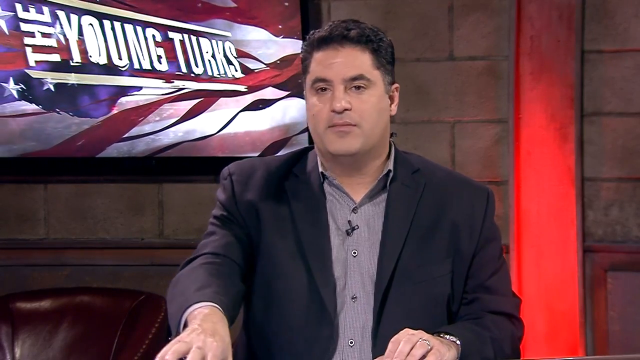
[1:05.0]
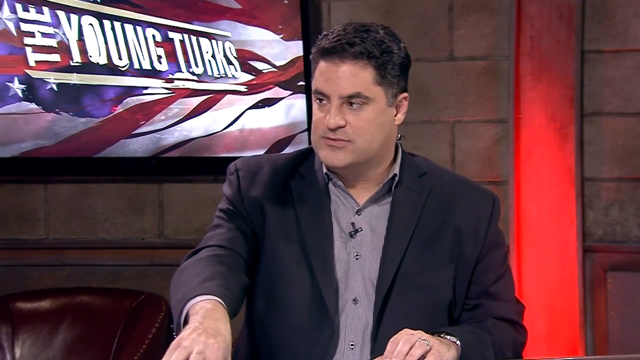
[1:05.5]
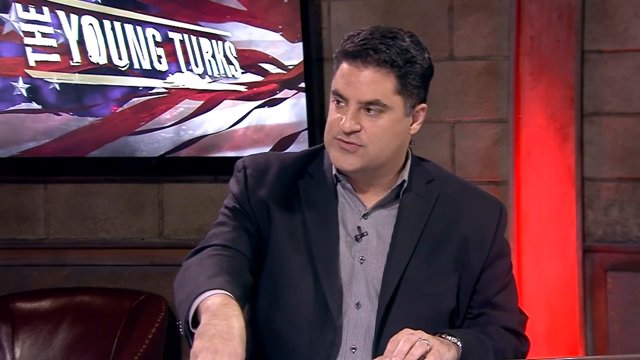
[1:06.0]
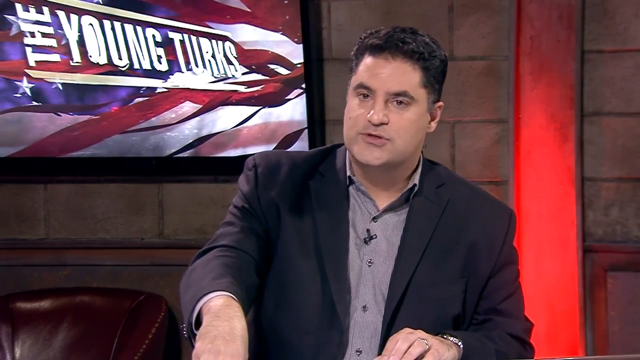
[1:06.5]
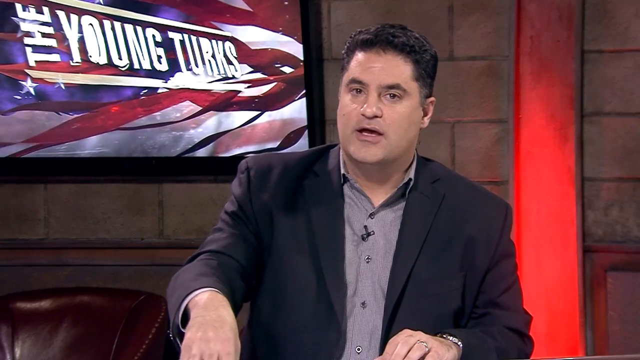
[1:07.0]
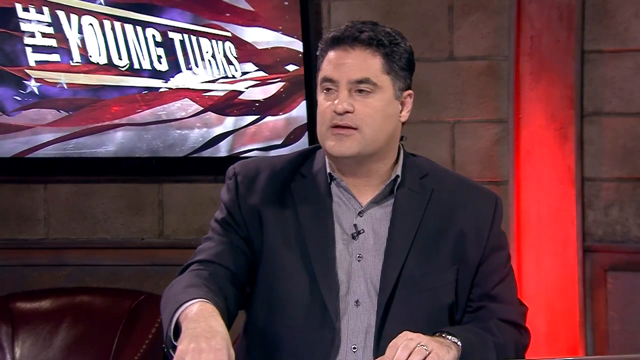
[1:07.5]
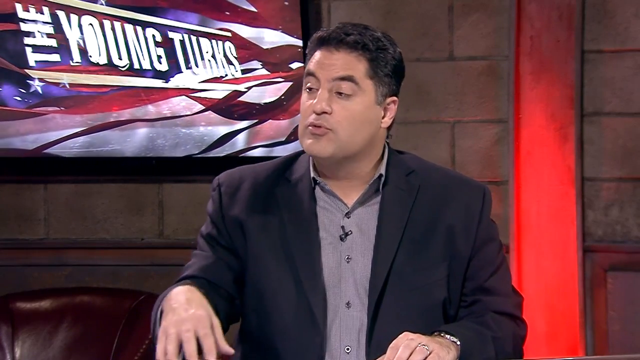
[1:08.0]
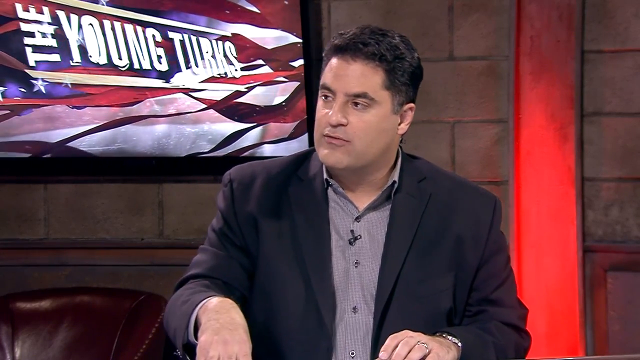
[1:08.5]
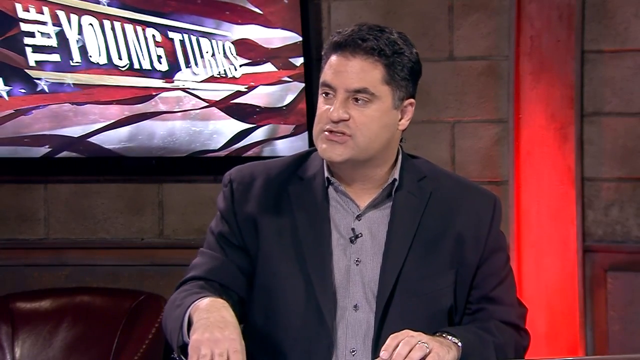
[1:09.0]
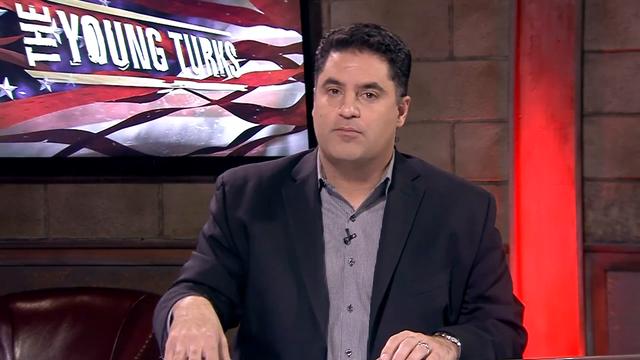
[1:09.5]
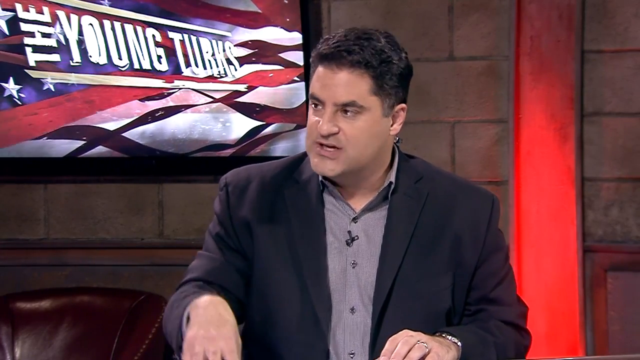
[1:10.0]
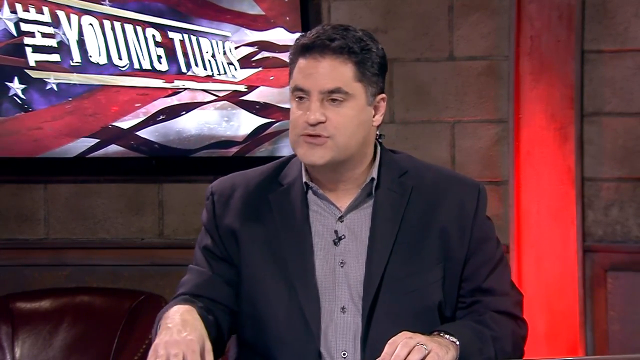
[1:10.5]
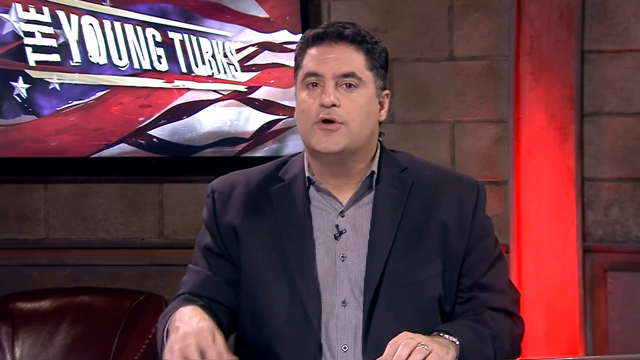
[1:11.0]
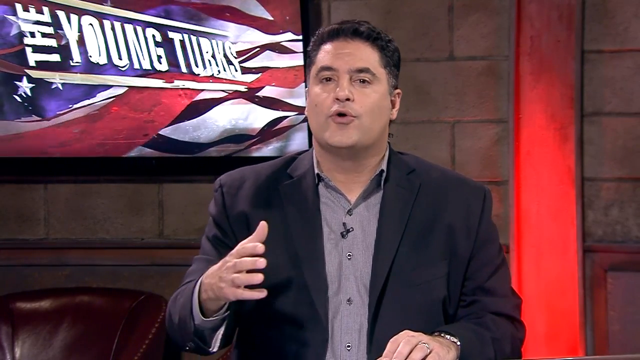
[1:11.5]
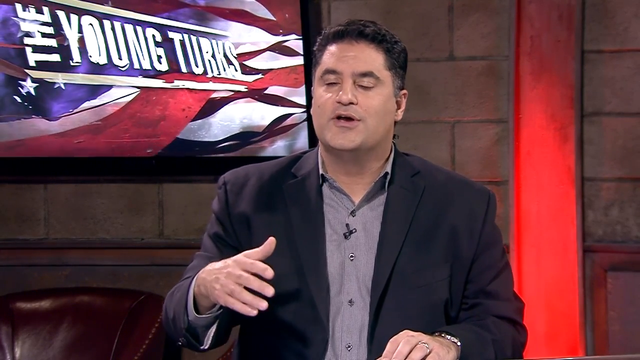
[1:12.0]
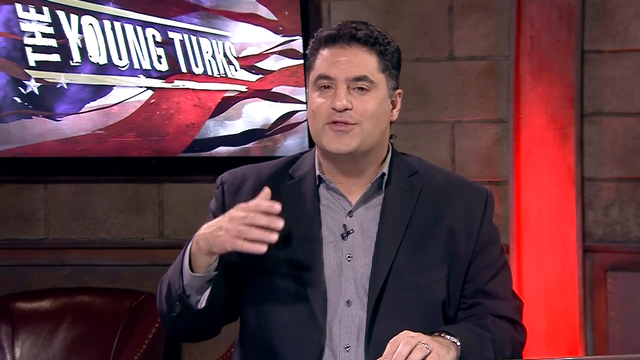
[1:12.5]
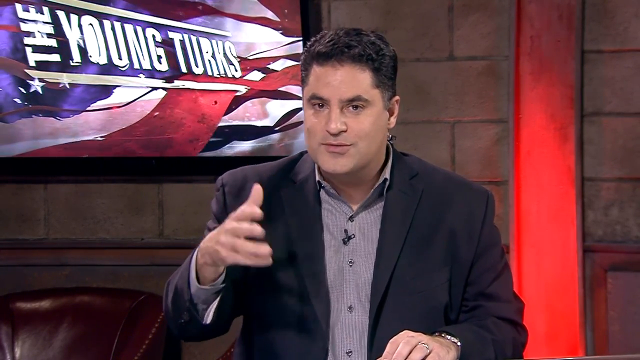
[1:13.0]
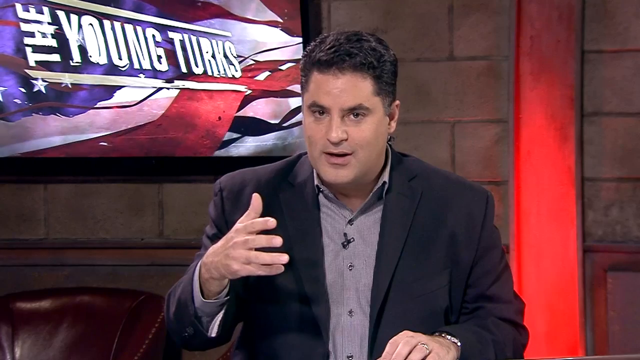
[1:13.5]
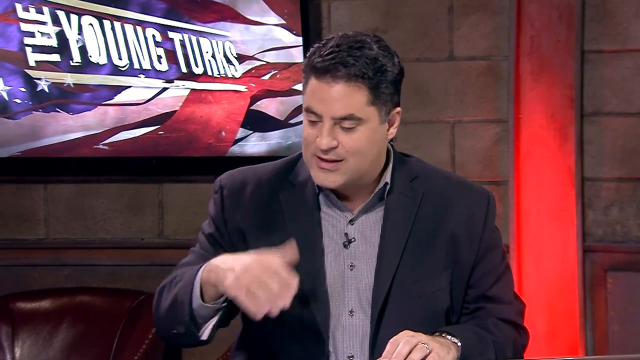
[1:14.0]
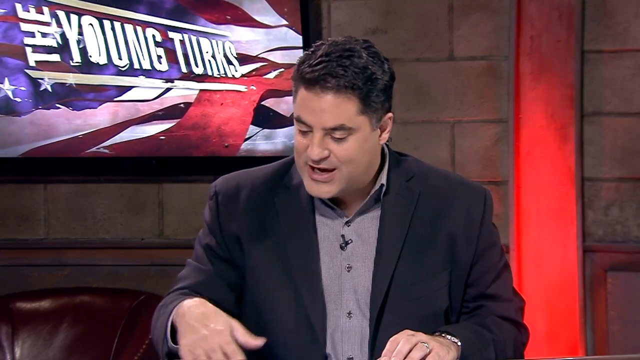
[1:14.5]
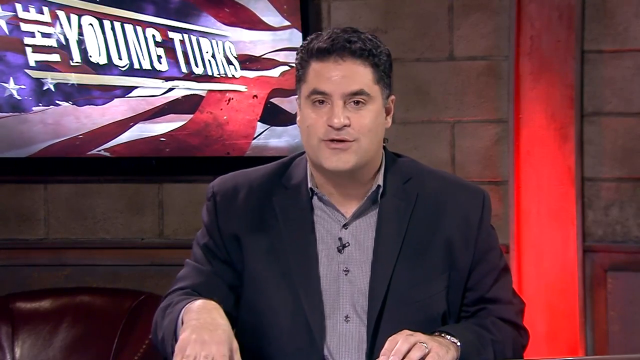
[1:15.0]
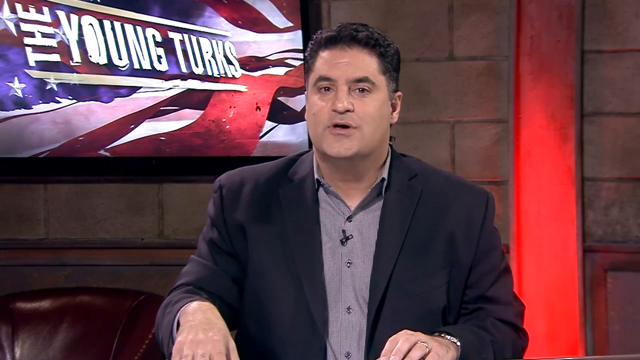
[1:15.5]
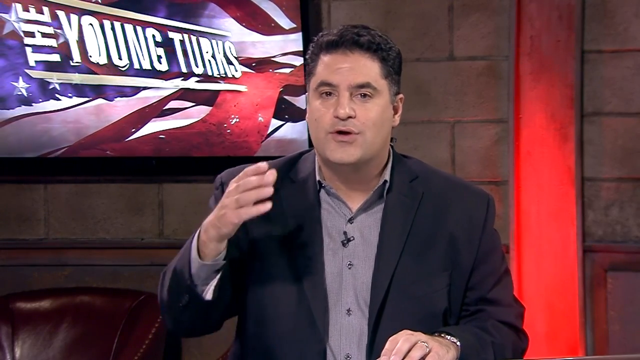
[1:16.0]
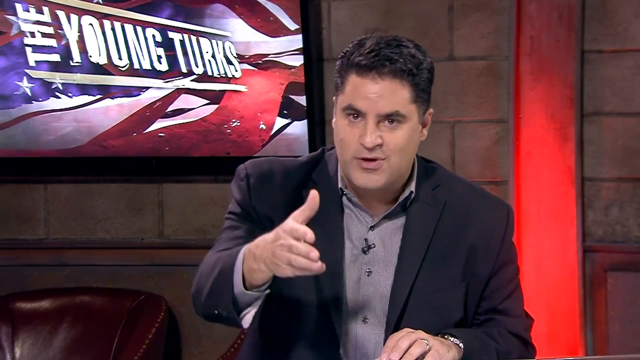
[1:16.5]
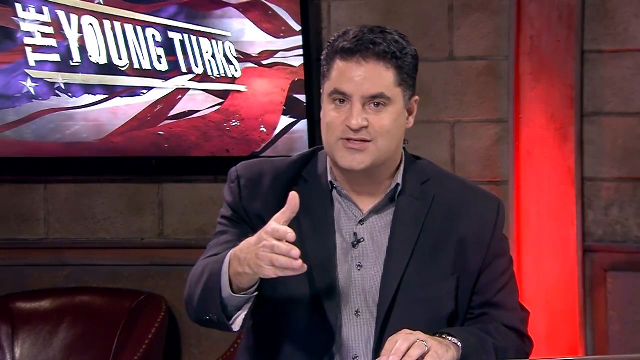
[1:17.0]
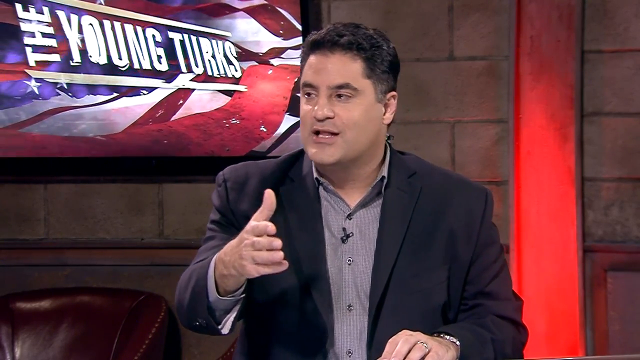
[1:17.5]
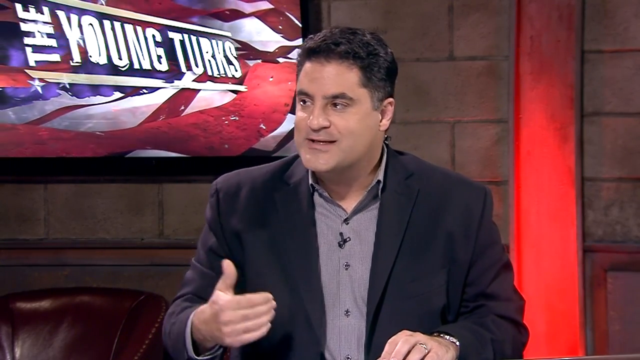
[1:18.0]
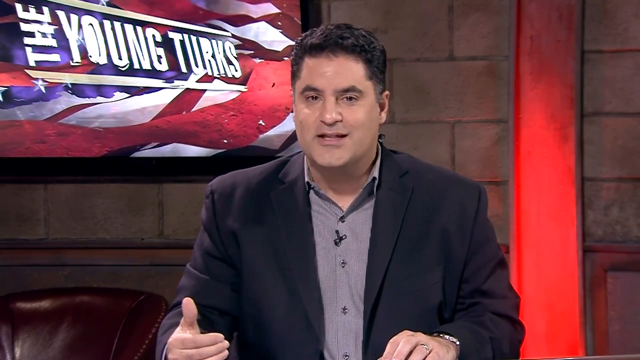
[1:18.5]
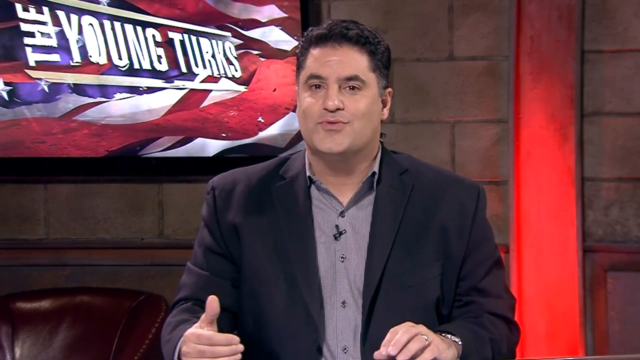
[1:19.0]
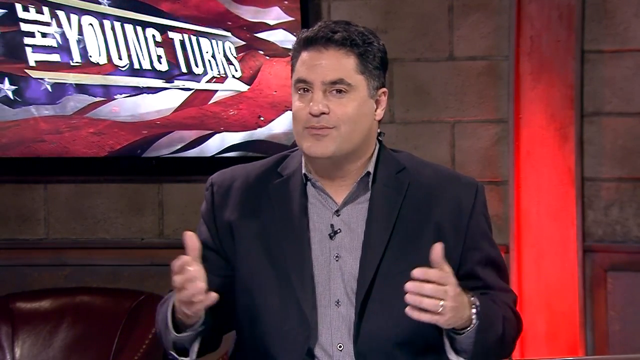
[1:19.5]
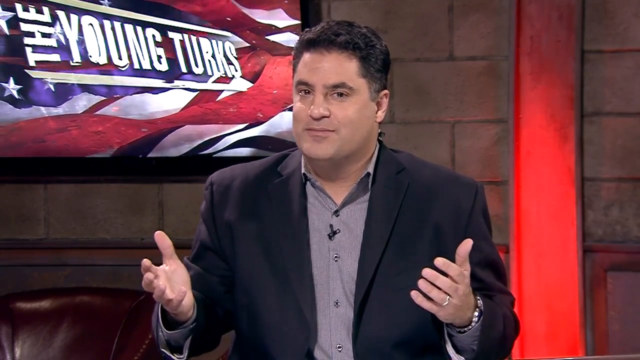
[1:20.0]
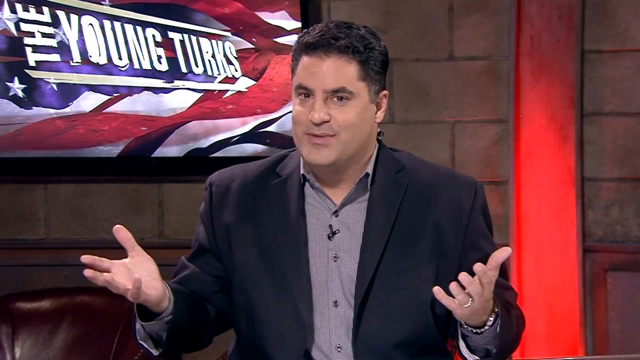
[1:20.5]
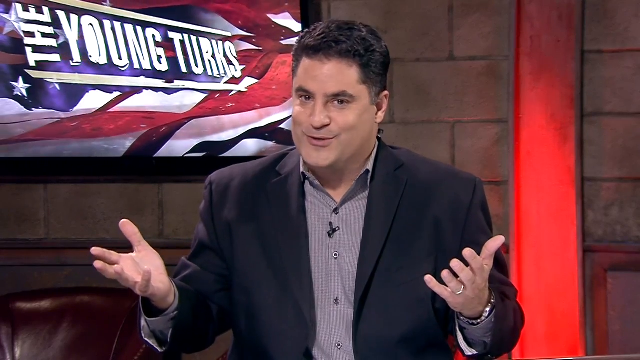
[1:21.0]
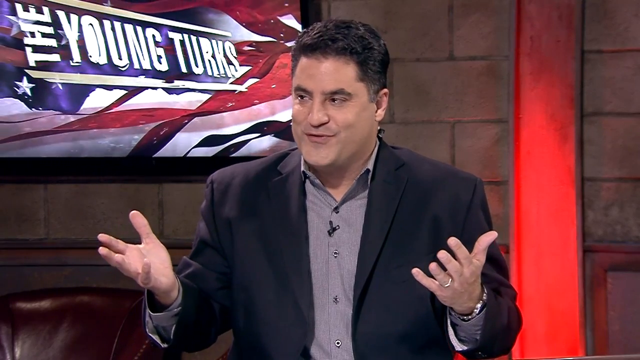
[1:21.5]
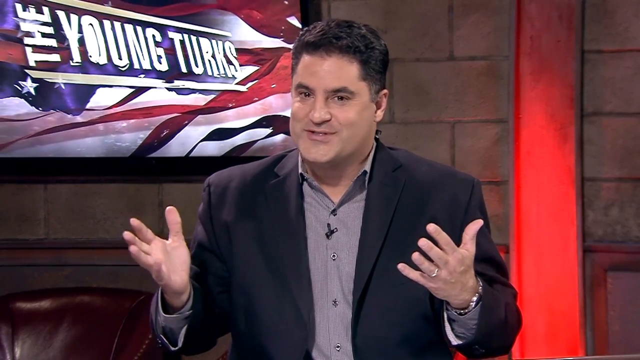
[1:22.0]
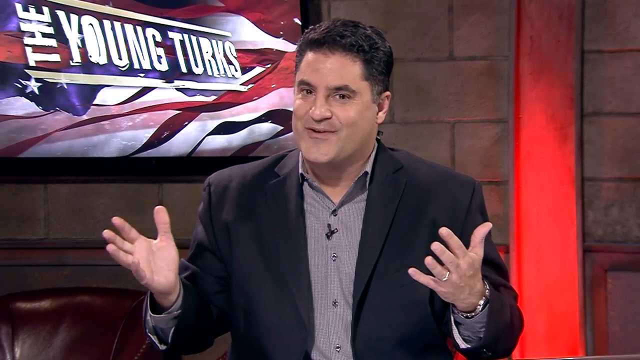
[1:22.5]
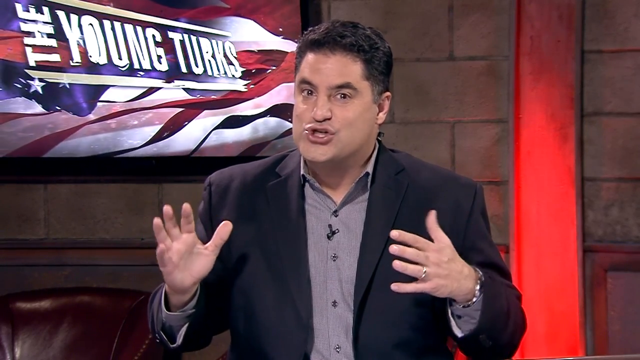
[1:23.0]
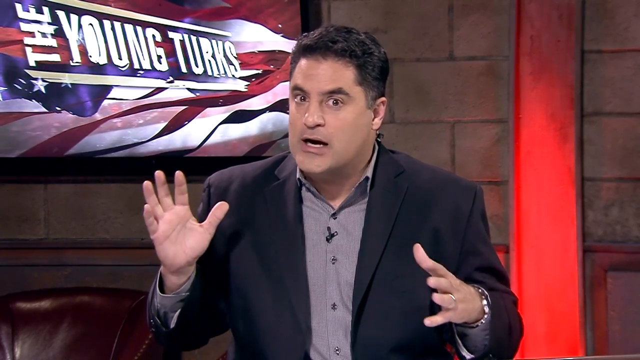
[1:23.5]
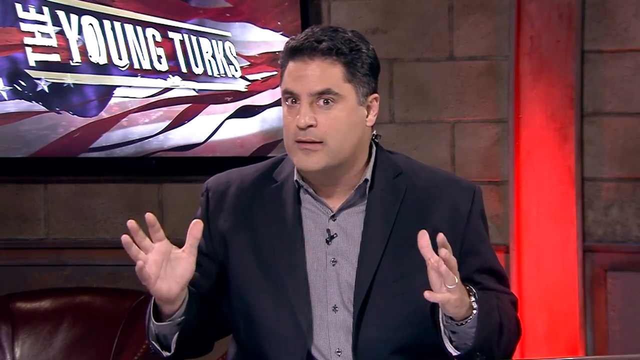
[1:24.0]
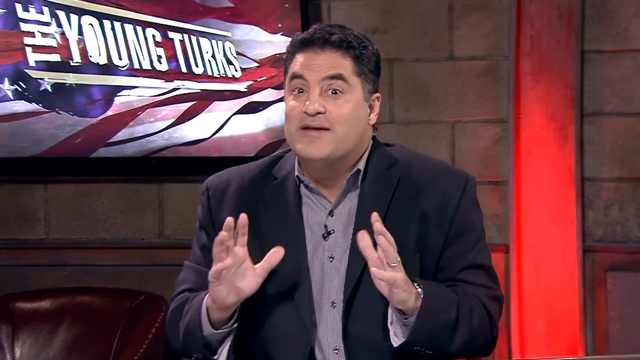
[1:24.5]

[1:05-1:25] A male reporter sits at a news desk talking, using his right hand as he speaks. He wears a dark black open blazer with a light gray button-up shirt, has darker hair and no facial hair. The background is light brown brick with a red border, and in the top left corner of the screen is a TV screen with "The Young Turks" written in the middle over a flag graphic with red and white stripes, a blue square and white stars. As he talks through the story, he looks down at his papers and references them. He wears a wedding ring on his left ring finger, and the top of a silver watch is visible on his wrist. He glances twice toward the woman reporter to his right, which is the left of the screen, and also looks straight ahead at the camera. He uses both hands as he talks, and a small microphone is clipped onto his shirt, just below the first button and above the second.